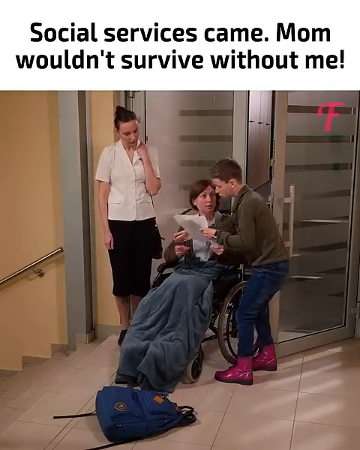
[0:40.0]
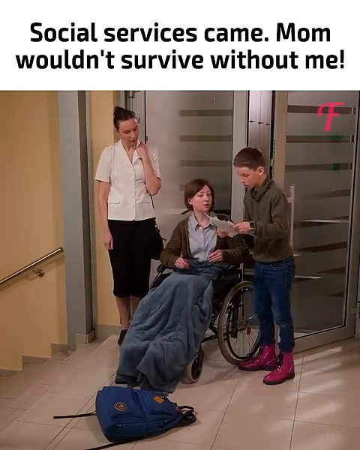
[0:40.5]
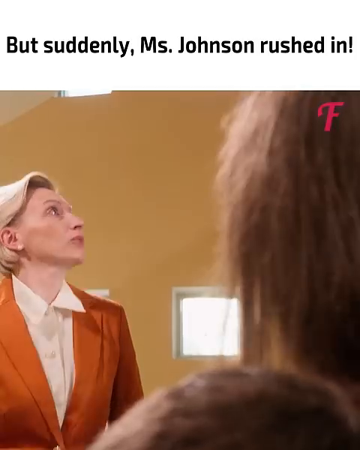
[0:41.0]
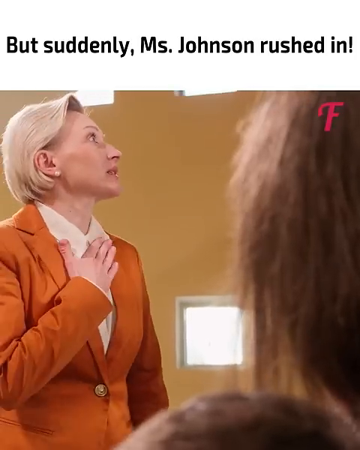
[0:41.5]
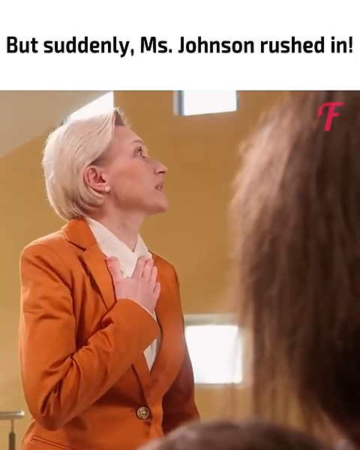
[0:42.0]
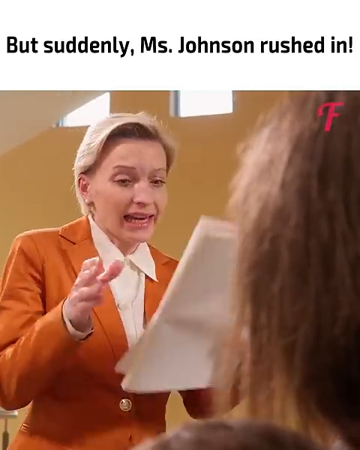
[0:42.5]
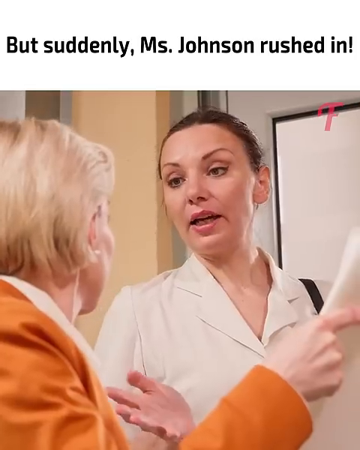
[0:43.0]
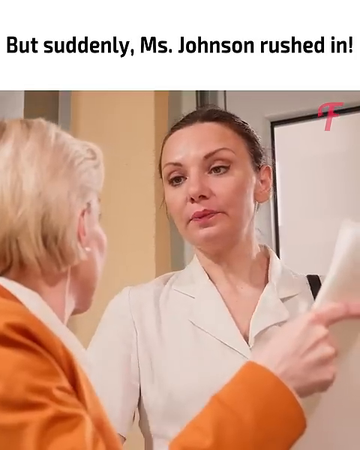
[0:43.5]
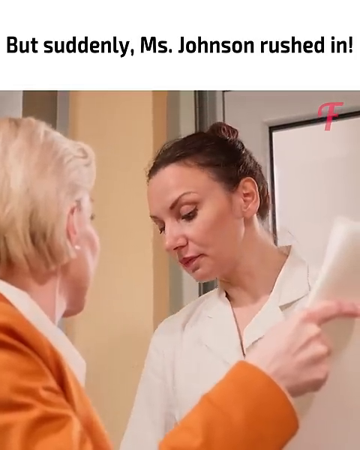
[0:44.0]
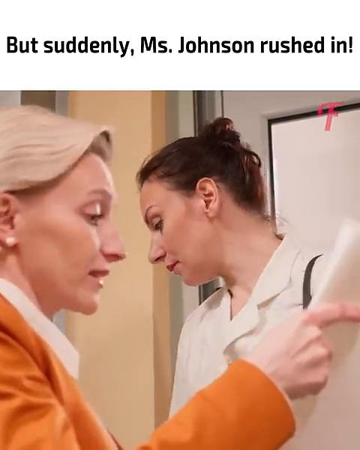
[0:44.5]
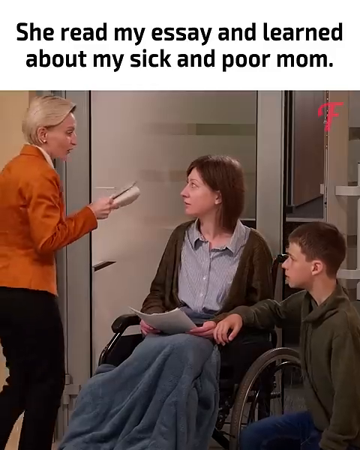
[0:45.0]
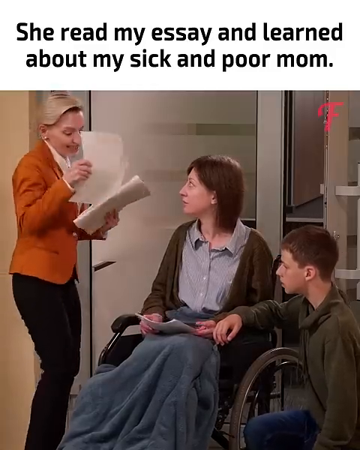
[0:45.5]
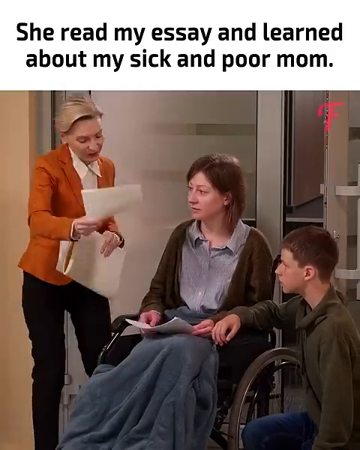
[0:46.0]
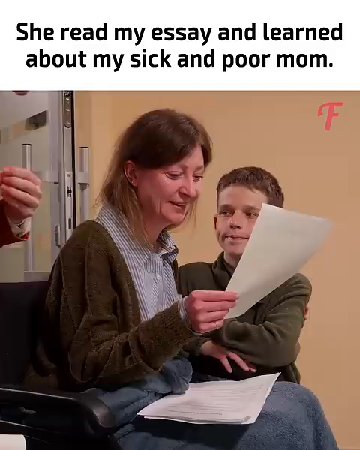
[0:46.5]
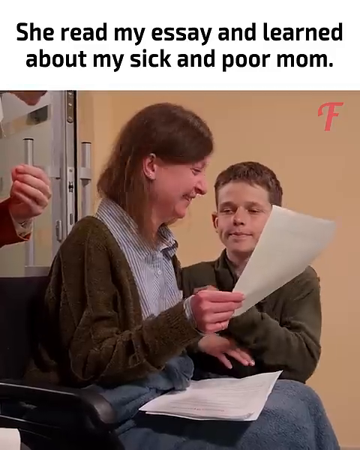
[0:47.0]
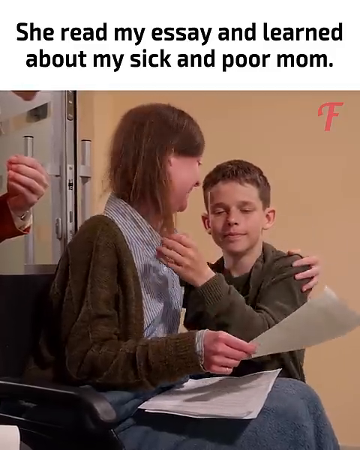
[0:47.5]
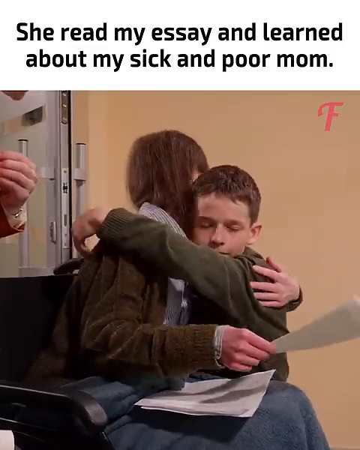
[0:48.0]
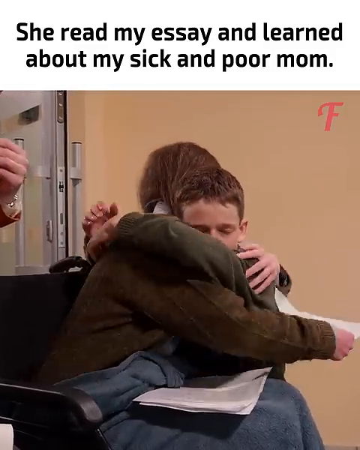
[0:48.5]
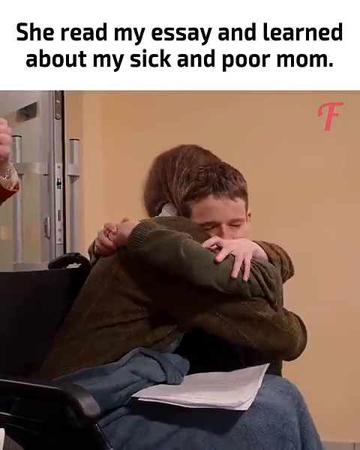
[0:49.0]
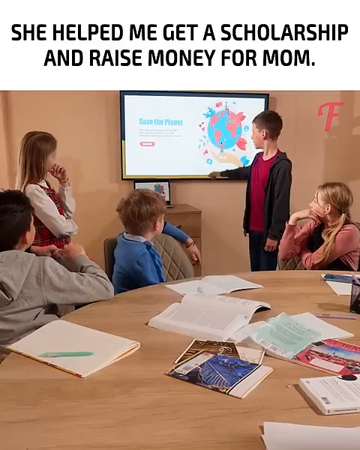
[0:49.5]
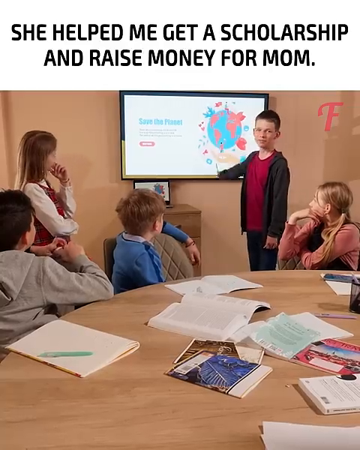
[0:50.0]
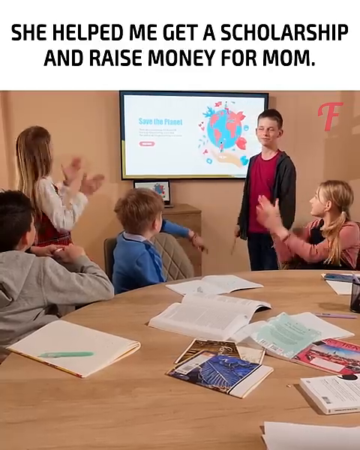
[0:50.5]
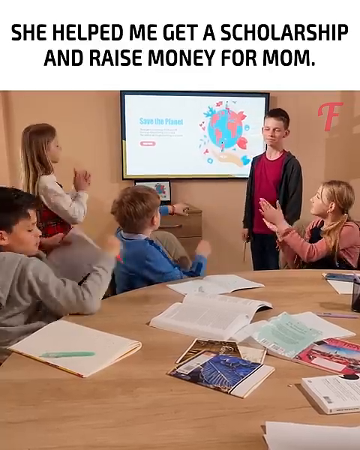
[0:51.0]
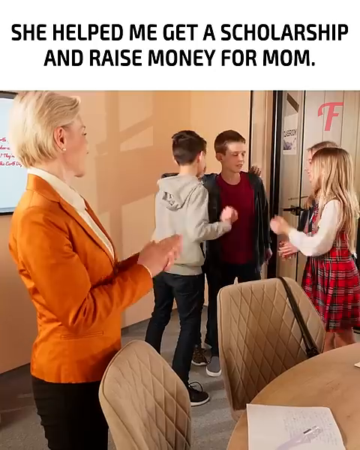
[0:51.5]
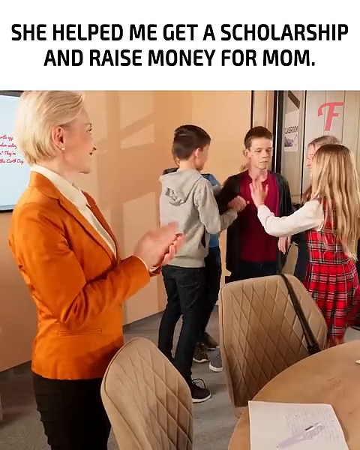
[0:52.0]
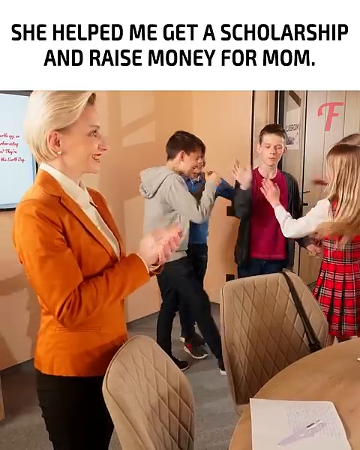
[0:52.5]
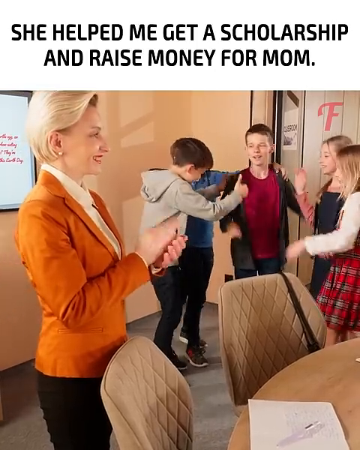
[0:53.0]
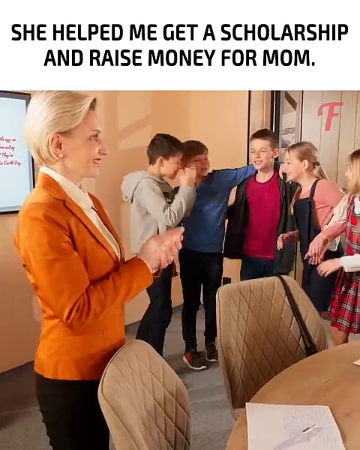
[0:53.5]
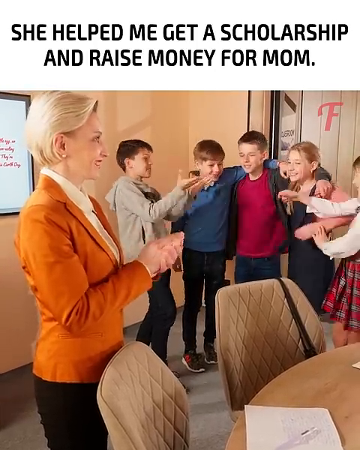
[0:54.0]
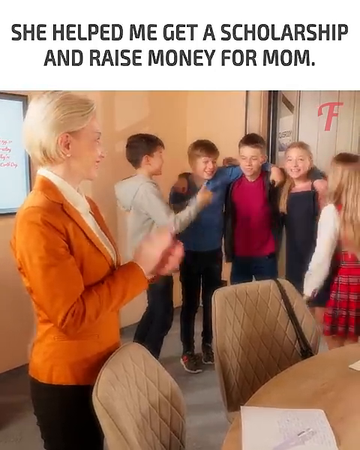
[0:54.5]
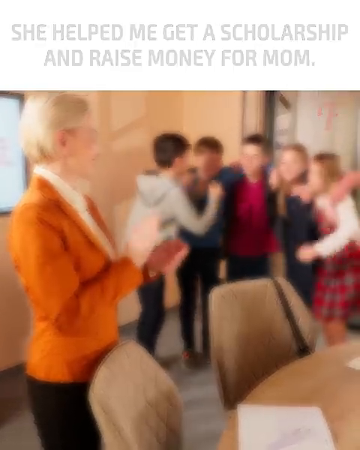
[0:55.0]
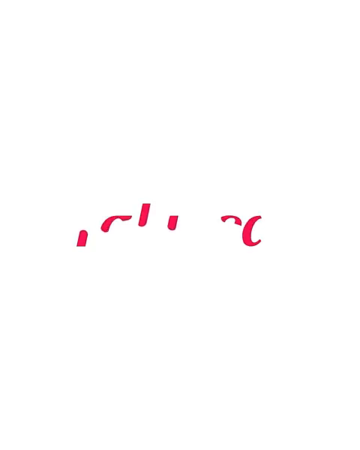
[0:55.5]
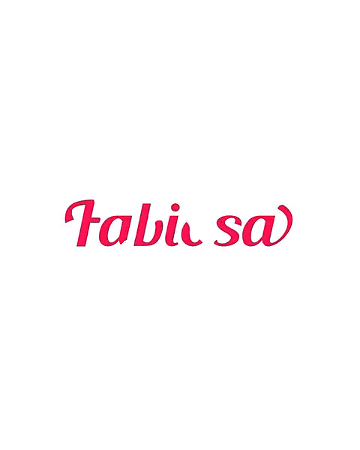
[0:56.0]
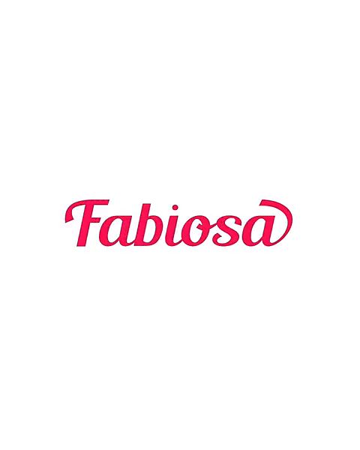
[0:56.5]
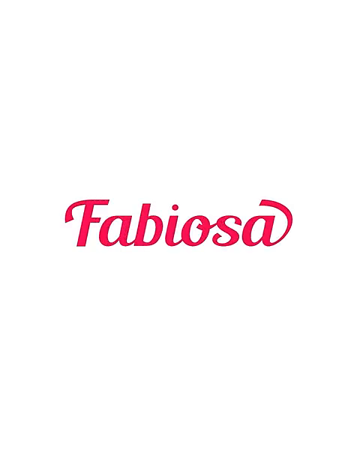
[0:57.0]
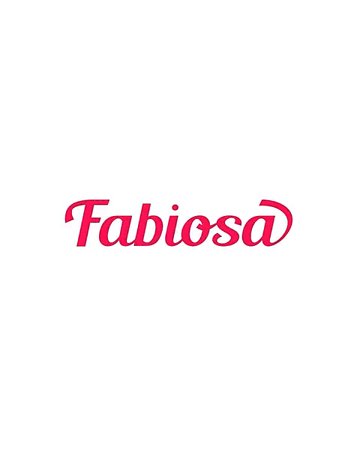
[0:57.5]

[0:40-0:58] The kid reads the papers as the teacher comes up with a hand on her chest and looks over to the businesswoman. She also has her own set of papers, which she reads out to the woman in the wheelchair. It appears to be good news, as the kid and his mom hug and smile. Next, the kid is in the classroom again, in front of the class, and the TV says "save the planet." He points, and everyone claps and cheers him on, the teacher included, all looking very happy. The word "Fabiosa" appears on screen.